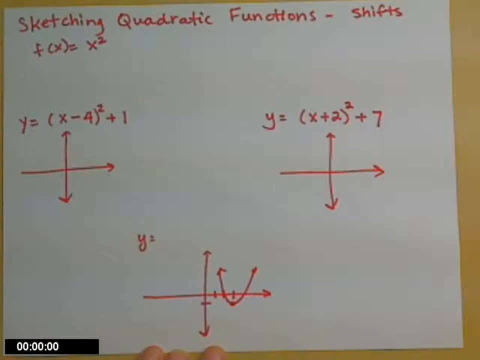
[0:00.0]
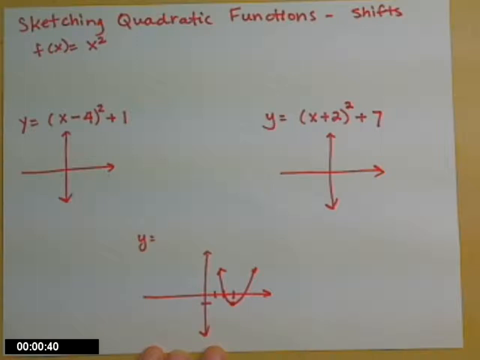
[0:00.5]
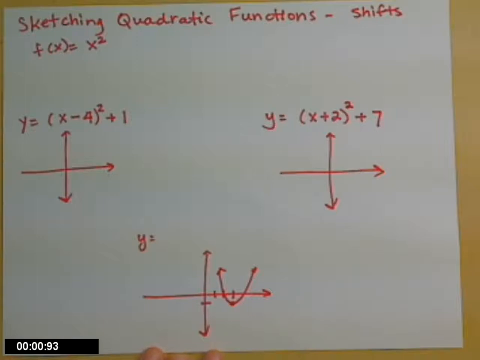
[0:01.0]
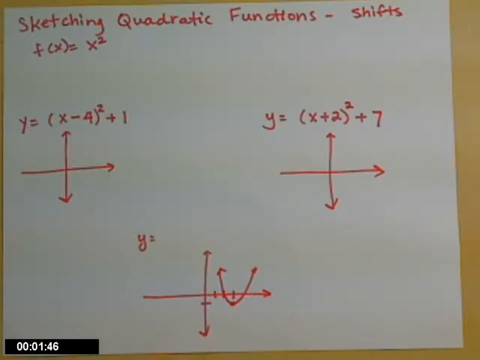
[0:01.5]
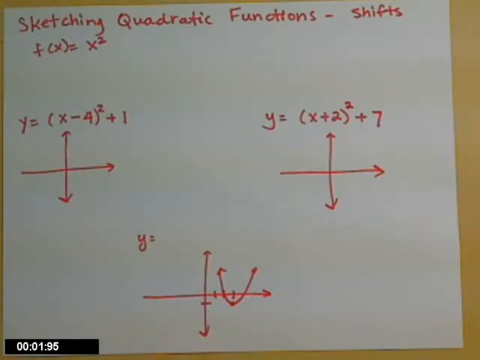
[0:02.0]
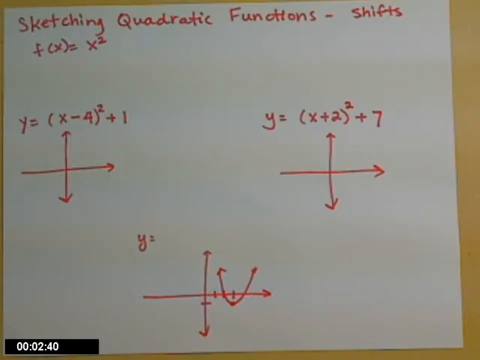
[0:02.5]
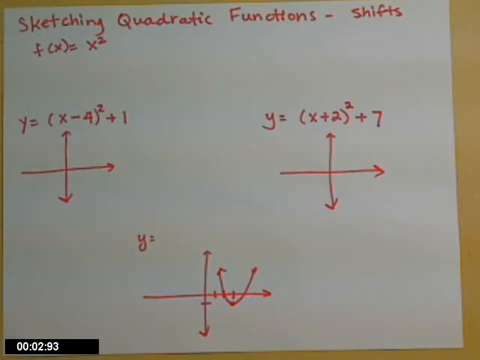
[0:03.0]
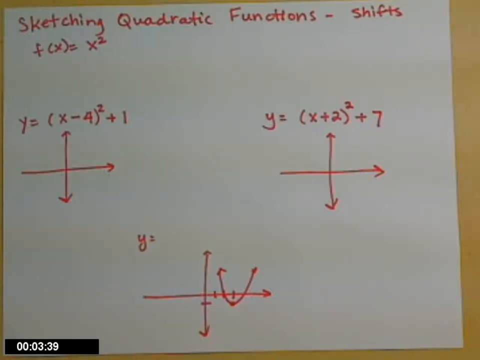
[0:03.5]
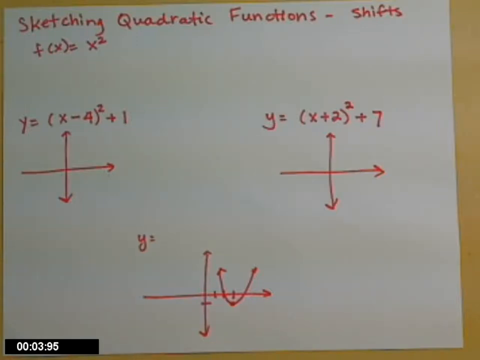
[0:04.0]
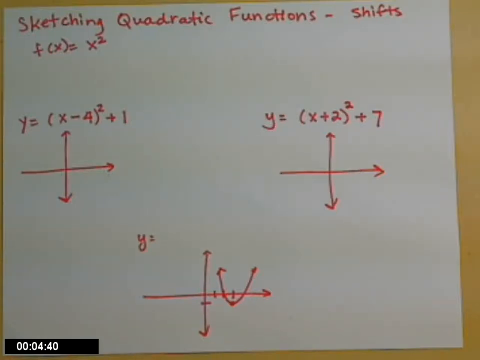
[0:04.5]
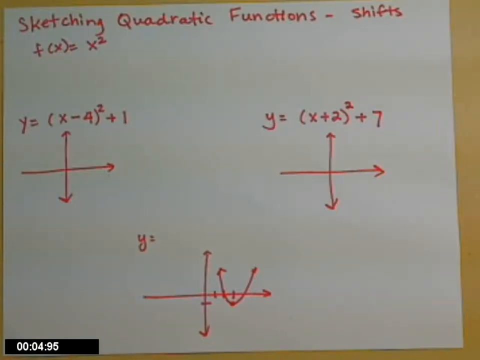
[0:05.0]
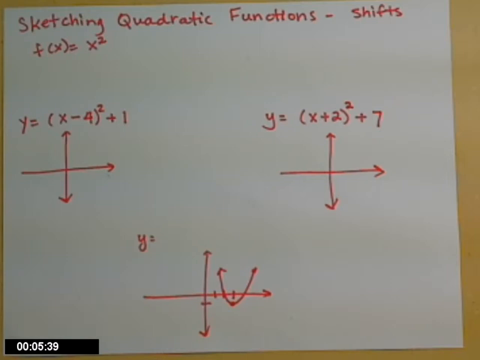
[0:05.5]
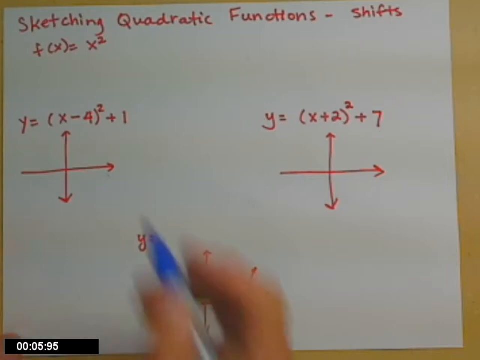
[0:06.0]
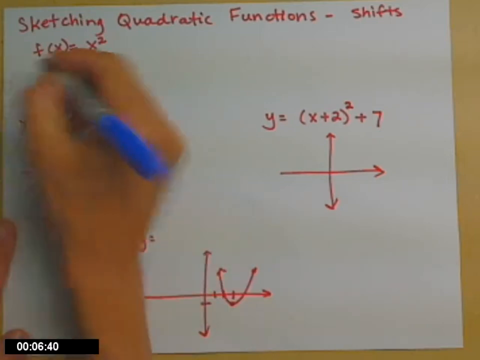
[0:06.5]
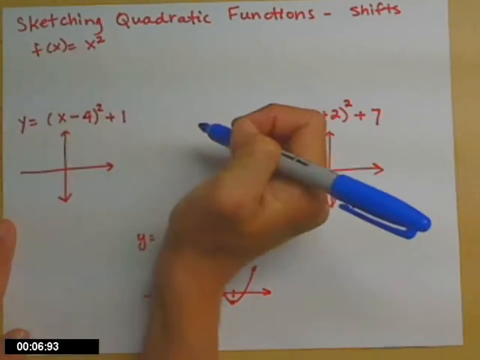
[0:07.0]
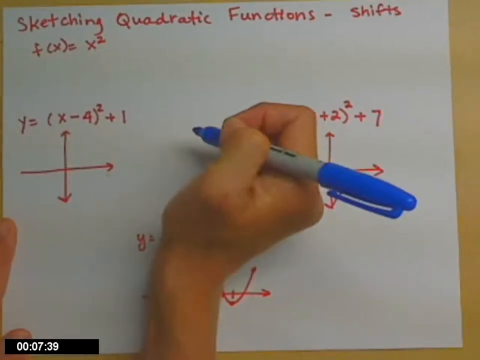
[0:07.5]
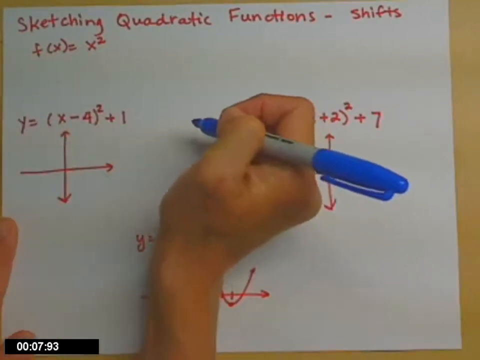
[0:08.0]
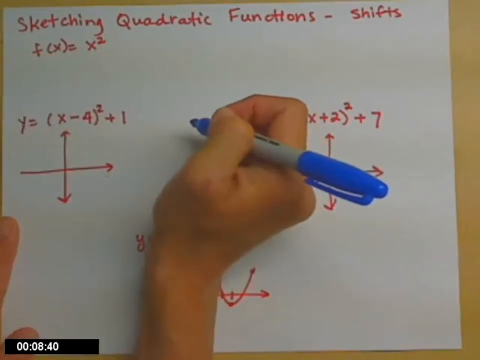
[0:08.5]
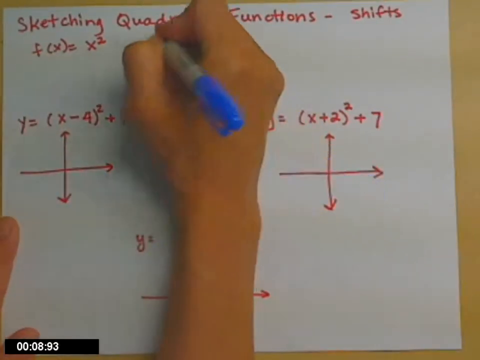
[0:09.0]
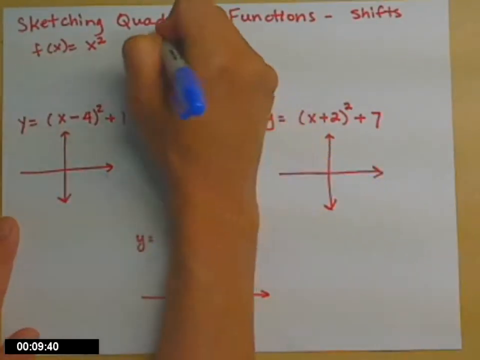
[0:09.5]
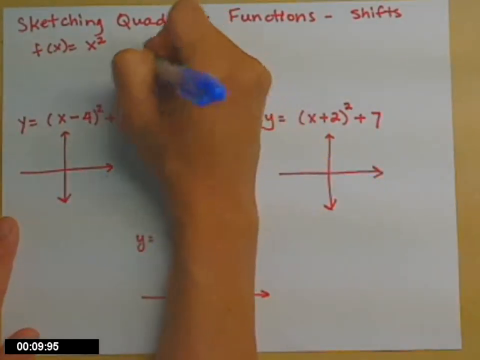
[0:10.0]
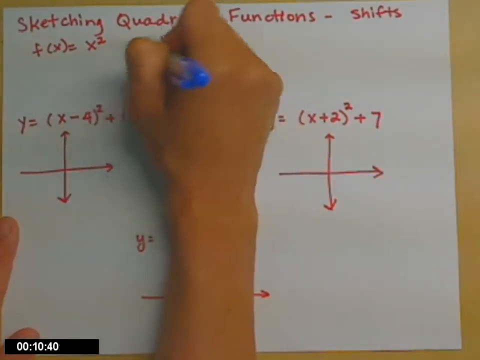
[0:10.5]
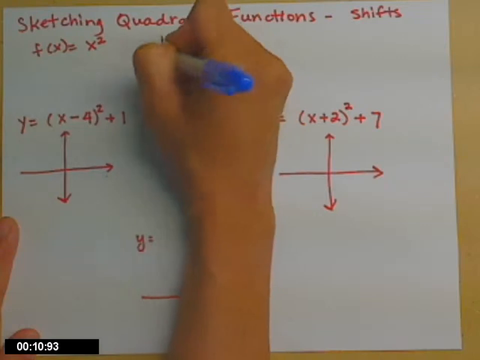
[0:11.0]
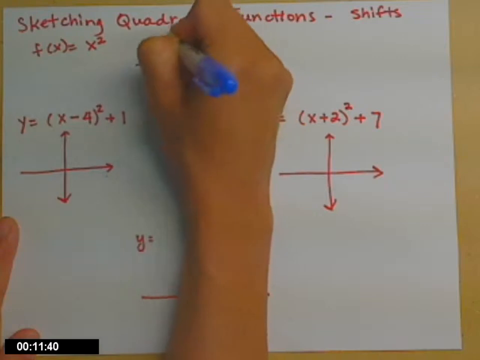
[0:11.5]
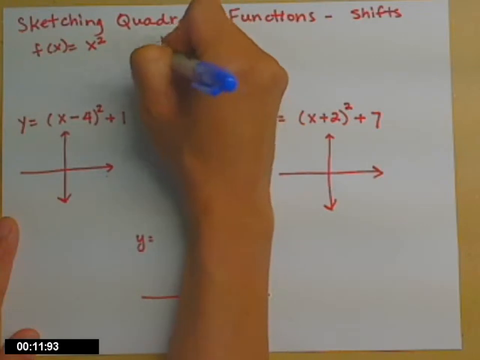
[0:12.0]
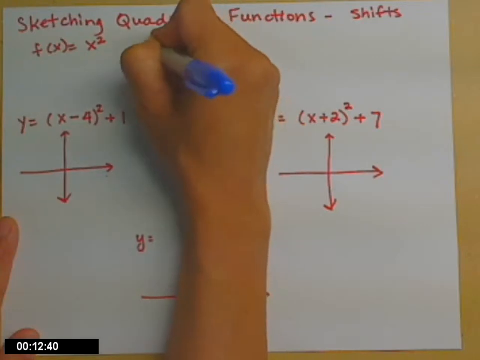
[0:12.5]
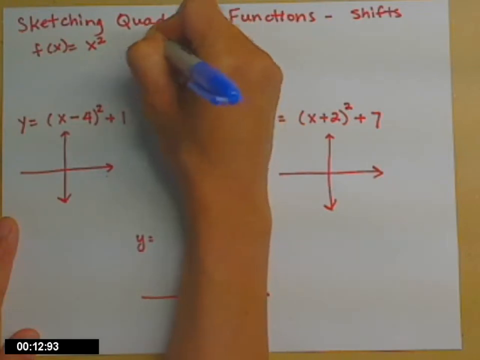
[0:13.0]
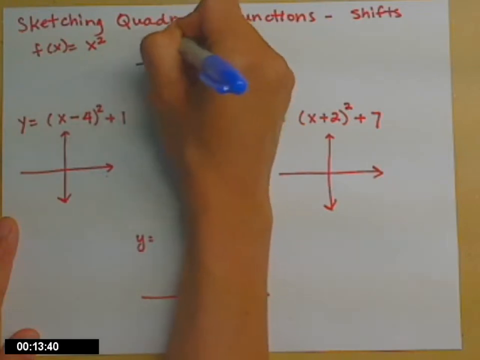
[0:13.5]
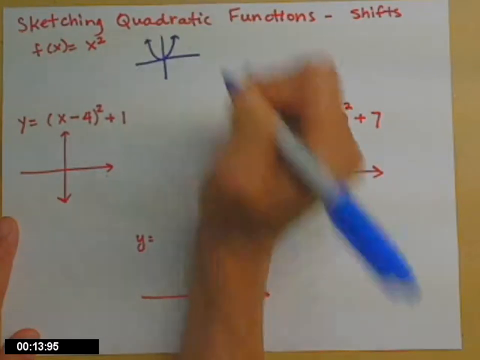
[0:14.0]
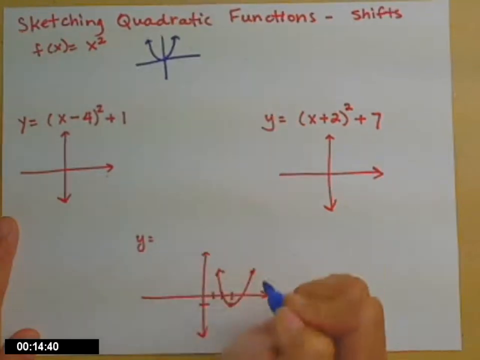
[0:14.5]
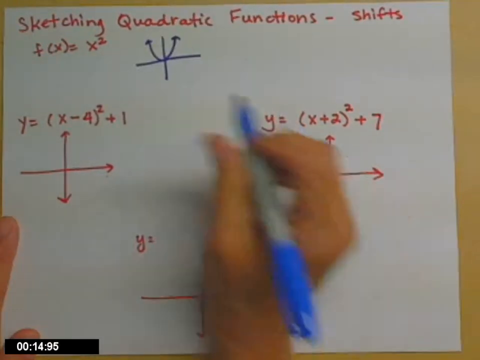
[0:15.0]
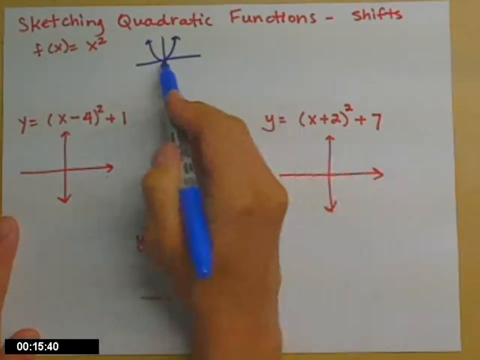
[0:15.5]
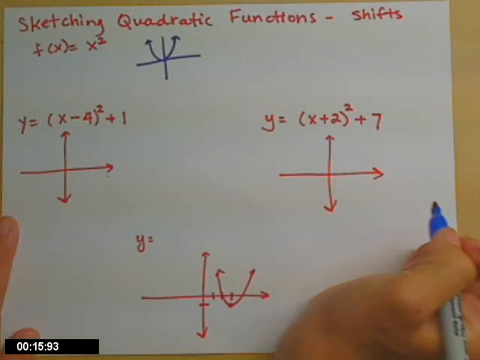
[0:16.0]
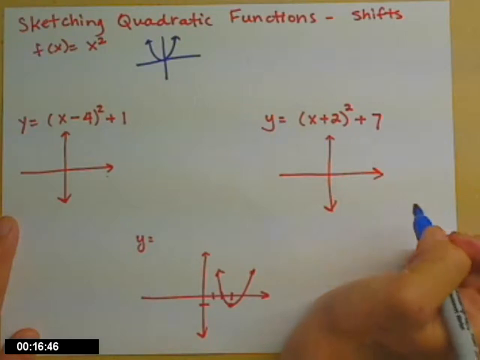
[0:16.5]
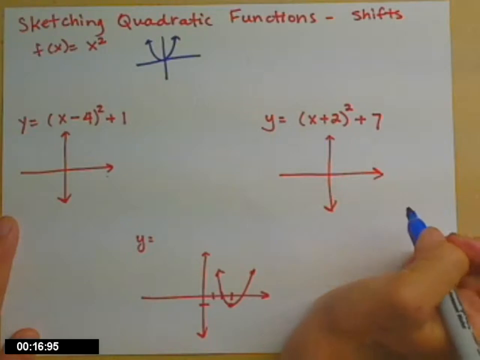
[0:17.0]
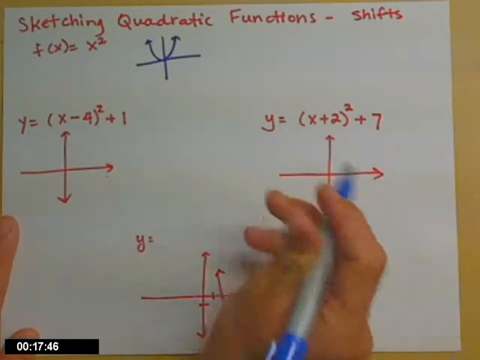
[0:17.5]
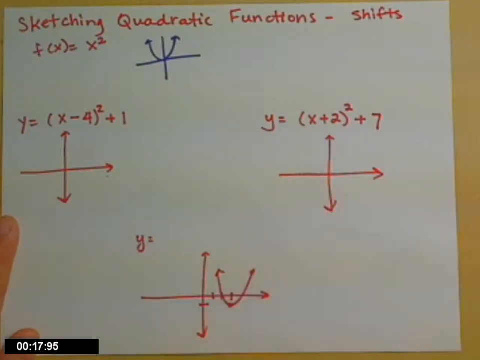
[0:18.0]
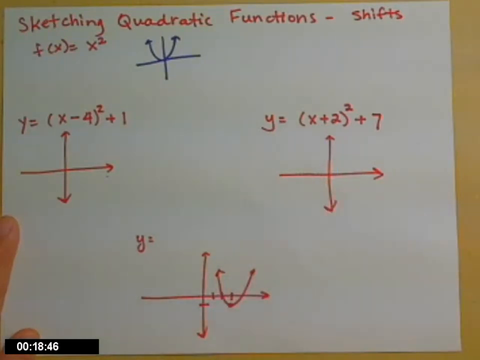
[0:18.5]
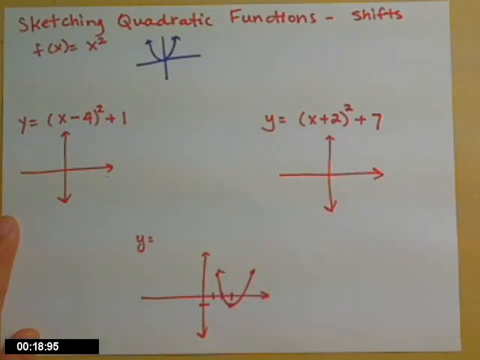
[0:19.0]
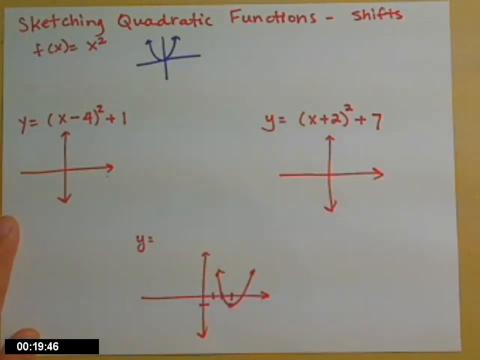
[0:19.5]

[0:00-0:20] A white piece of paper has red writing on it. In the top left-hand corner it reads "sketching quadrics", and under that is an equation, "F(X) = X 2". Below are three sums that look quite similar but a little different; each has an arrow pointing up and down vertically and an arrow pointing to the right, in a cross shape. Above the left arrow cross it reads "Y = (X = 4) 2 + 1", over the section on the right-hand side it reads "Y = (X + 2) 2 + 7", and the bottom one, in the center of the screen, reads "Y =". This bottom one also has a U shape in the right-hand section of the vertical arrow. A few seconds in, someone's hand appears: a finger of their left hand is visible, and they hold a blue pen in their right hand, pinched between thumb and finger. They move their hand to the very top of the page, in the centre towards the left, and draw another X, this time with a U over the top section and two arrows pointing upwards.